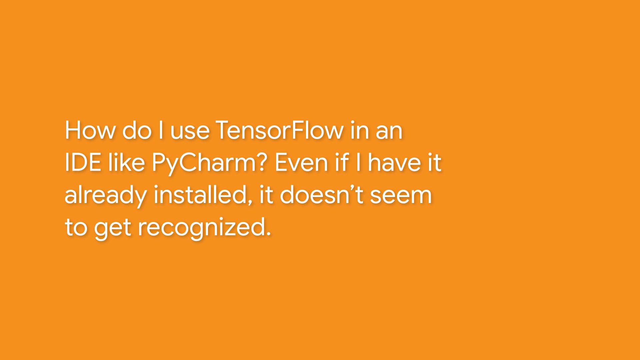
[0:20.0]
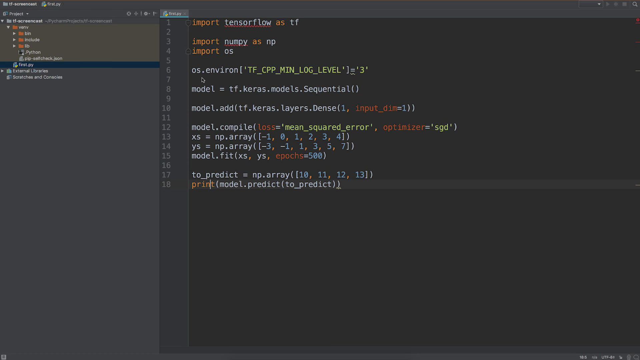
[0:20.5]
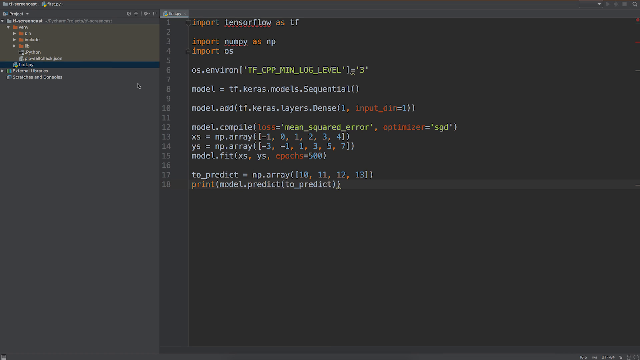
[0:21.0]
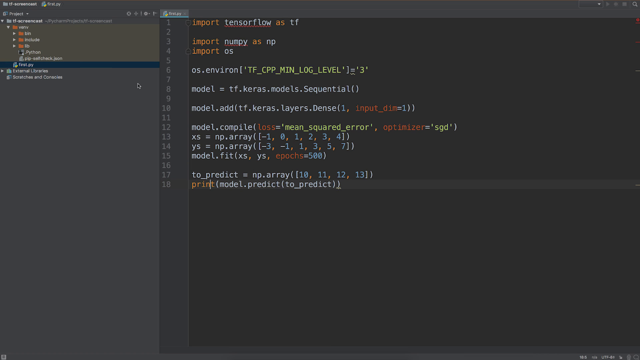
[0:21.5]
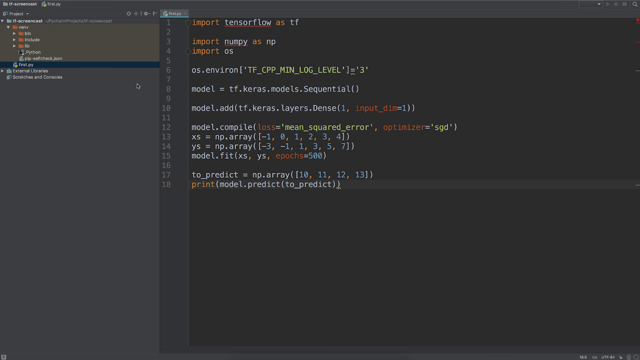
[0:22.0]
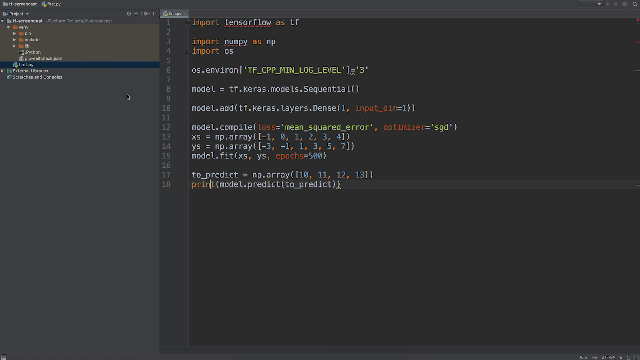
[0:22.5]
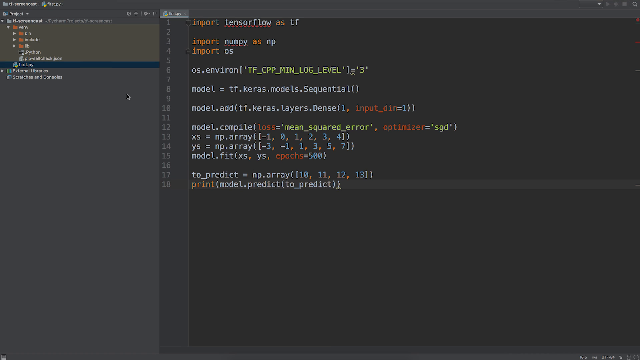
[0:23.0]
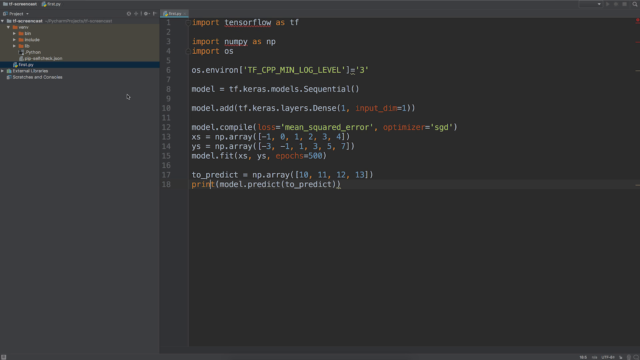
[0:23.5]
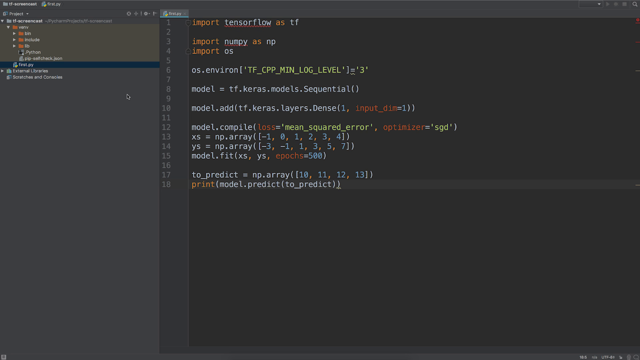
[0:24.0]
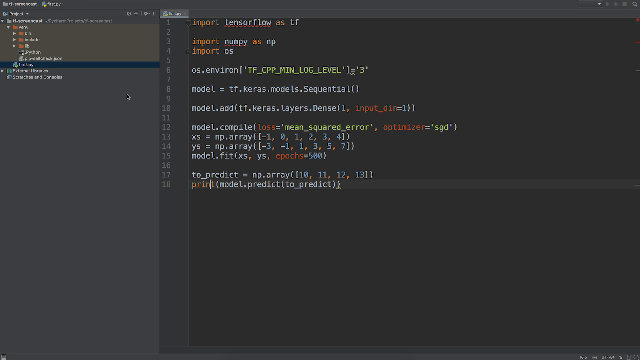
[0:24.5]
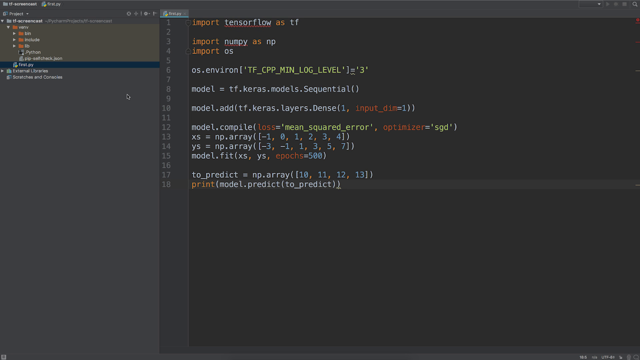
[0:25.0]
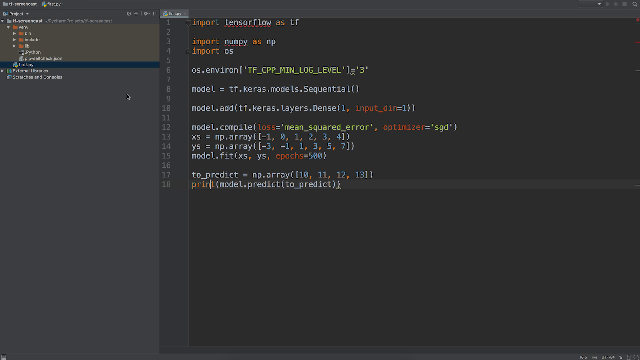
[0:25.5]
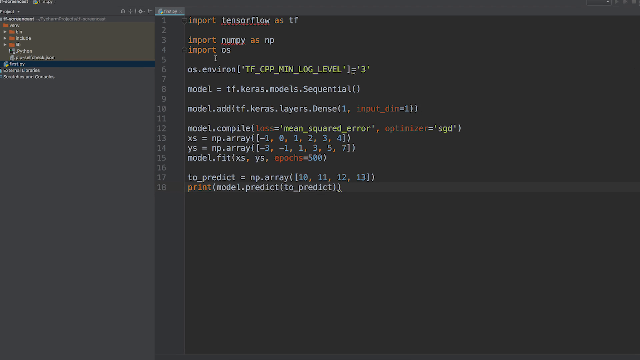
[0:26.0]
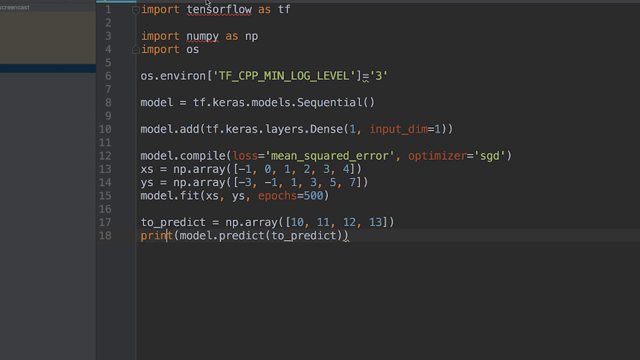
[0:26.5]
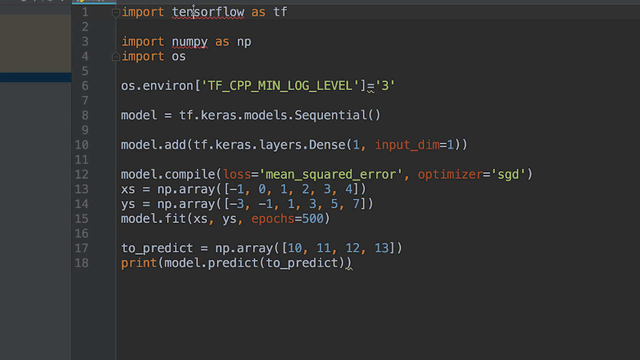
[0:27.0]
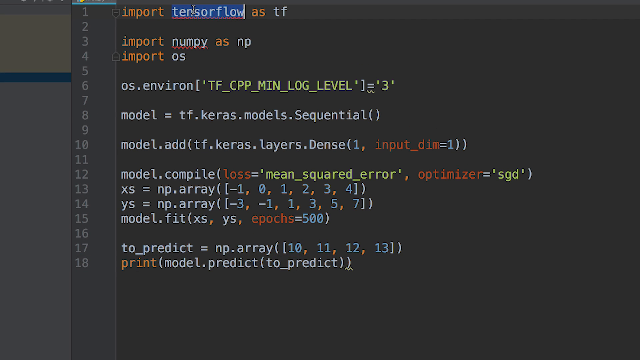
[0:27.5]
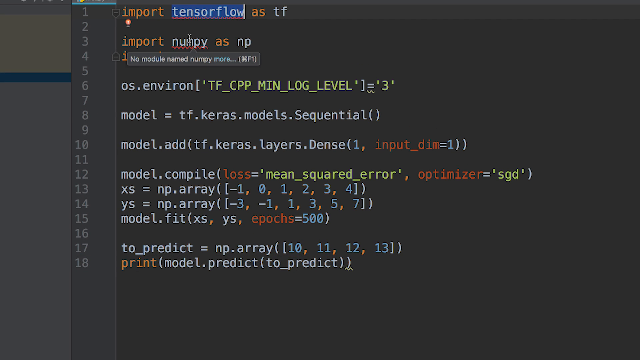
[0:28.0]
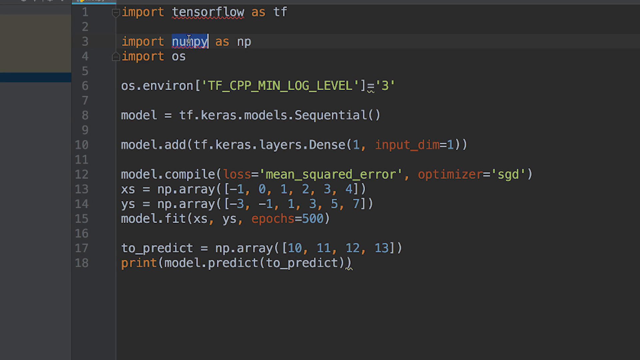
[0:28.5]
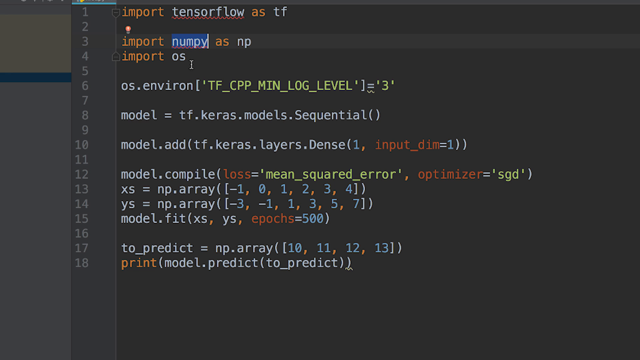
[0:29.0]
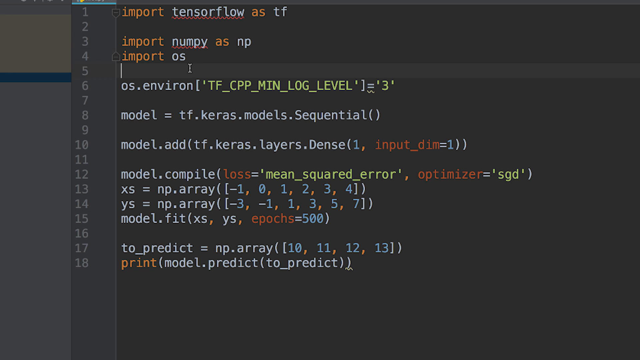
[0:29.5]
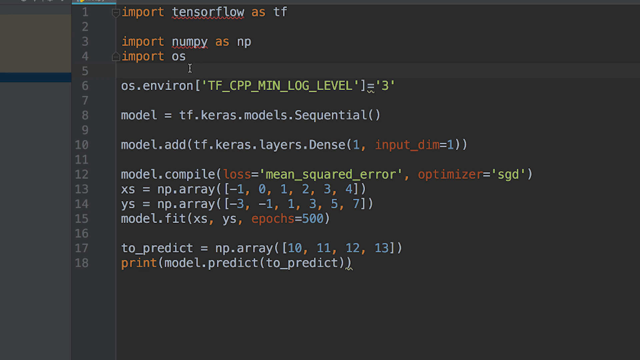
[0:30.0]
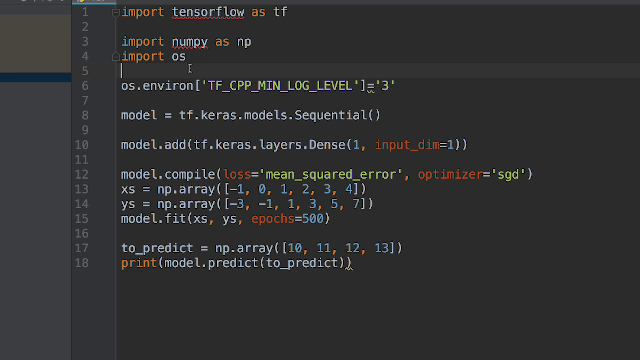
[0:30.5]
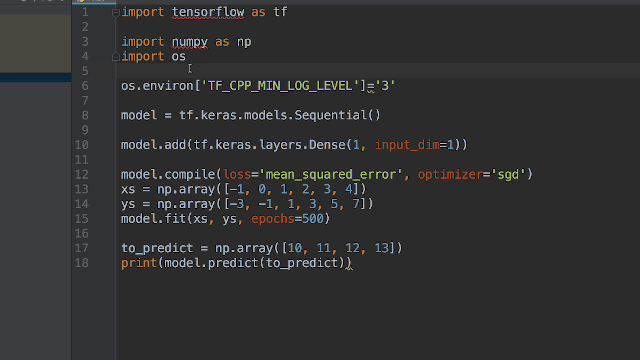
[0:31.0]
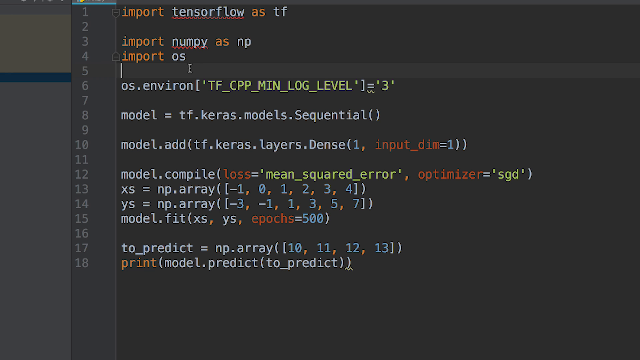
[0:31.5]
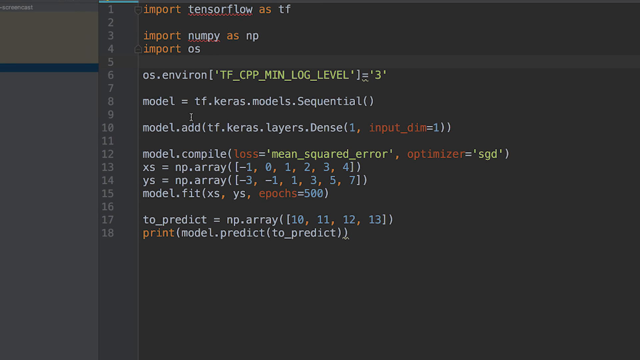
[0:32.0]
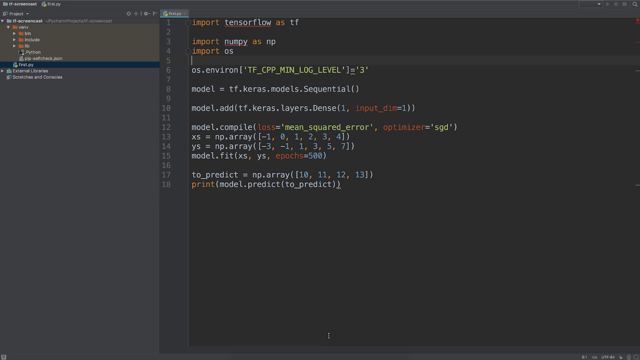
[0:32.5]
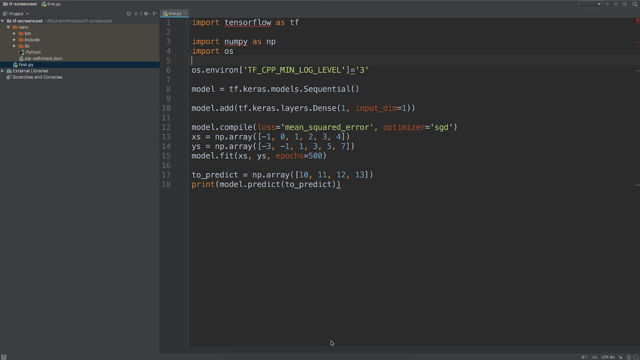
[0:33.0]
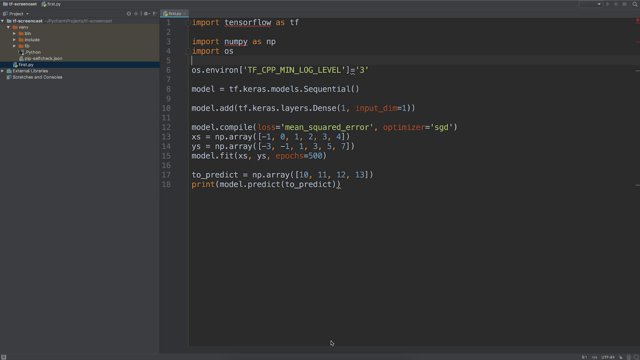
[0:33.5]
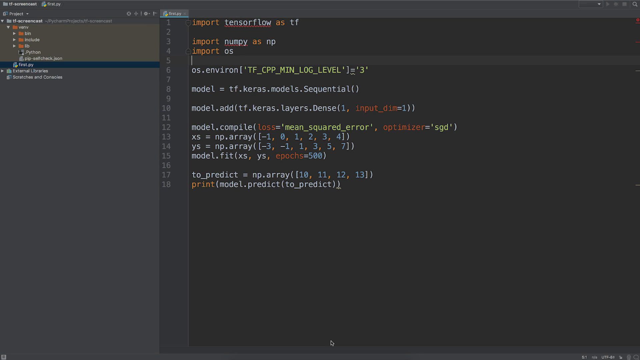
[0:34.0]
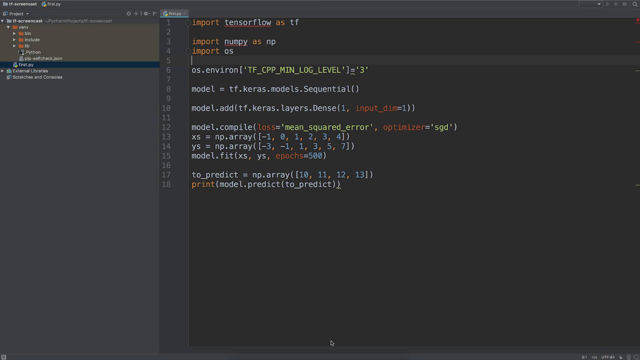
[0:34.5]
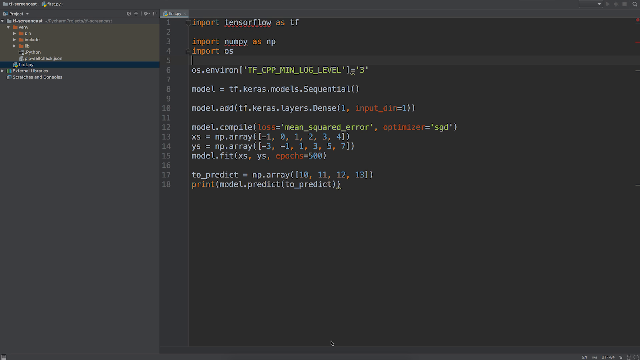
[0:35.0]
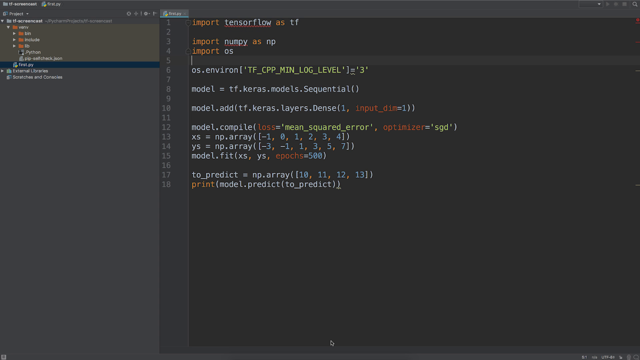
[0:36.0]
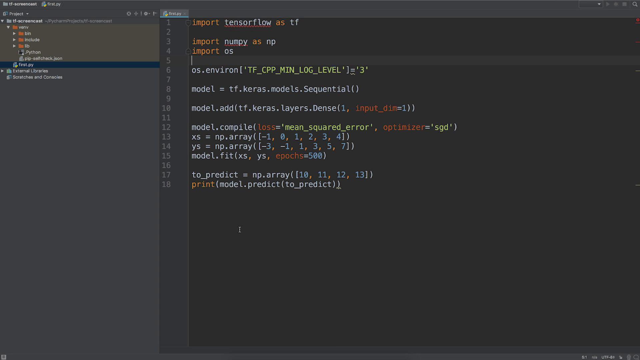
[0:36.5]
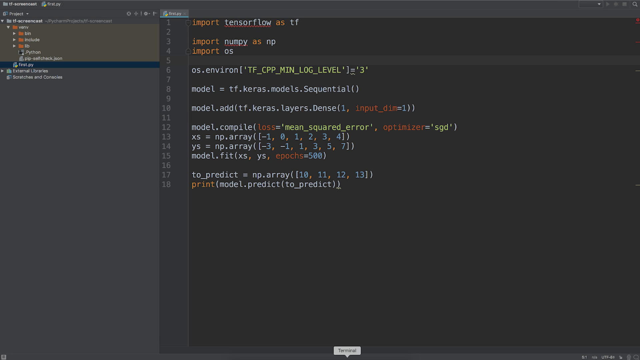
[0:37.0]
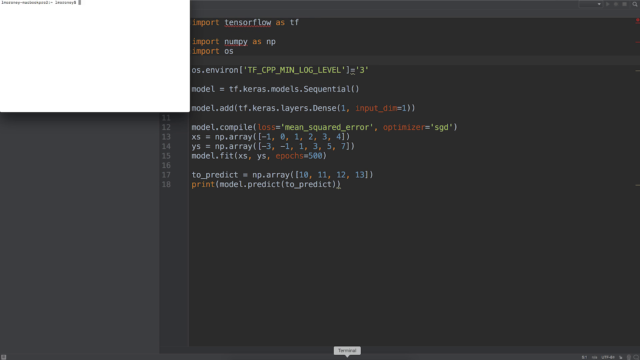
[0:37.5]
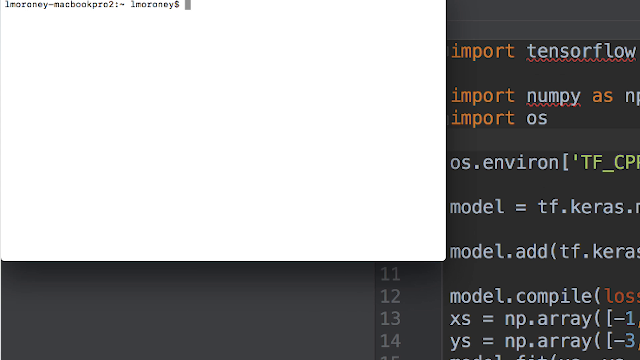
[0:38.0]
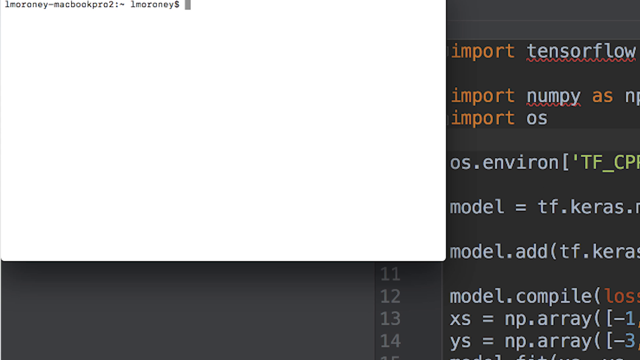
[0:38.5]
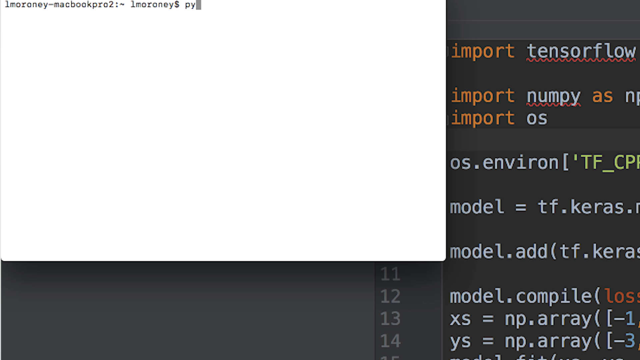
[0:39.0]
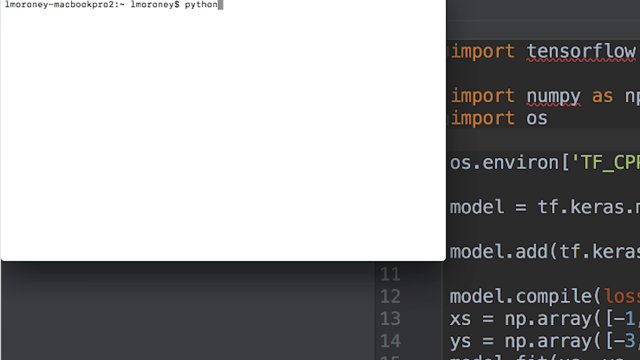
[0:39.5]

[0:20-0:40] The orange screen with the white text "how do I use TensorFlow in an IDE like PyCharm, even if I have it already installed, it doesn't seem to get recognized" is shown briefly. A technical code screen then loads, looking like HTML or something similar: the right two-thirds are black and the left one-third is gray, with lines numbered from one down to 18. Visible words include "TensorFlow," "model," and "model add." No person is on screen. He zooms in, and "numpy" is highlighted in blue.